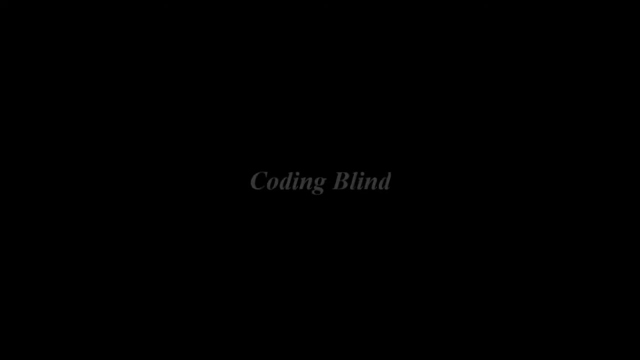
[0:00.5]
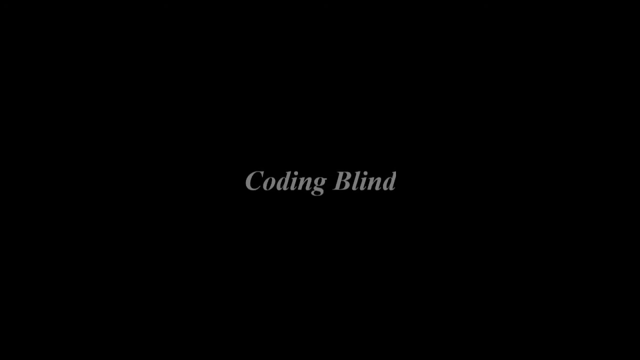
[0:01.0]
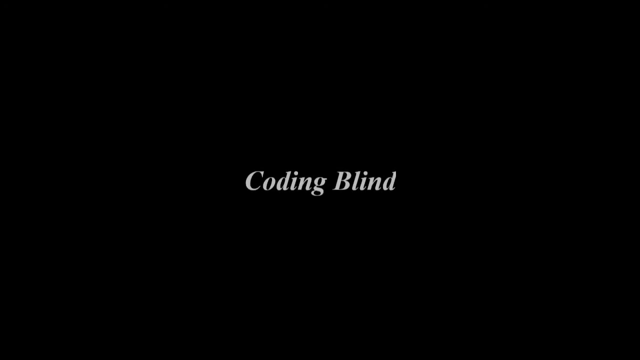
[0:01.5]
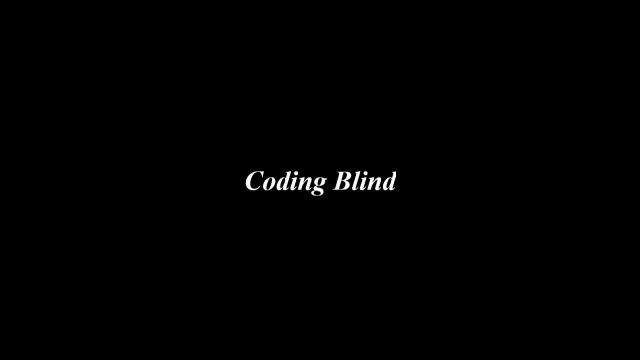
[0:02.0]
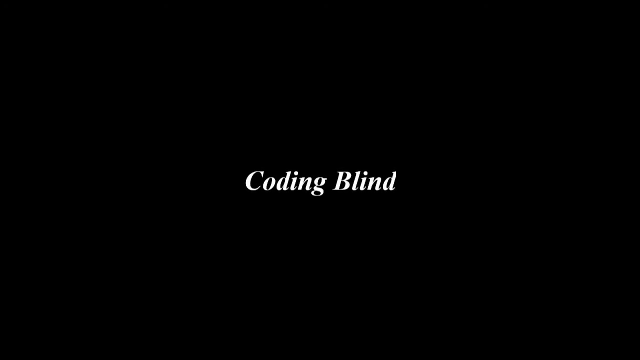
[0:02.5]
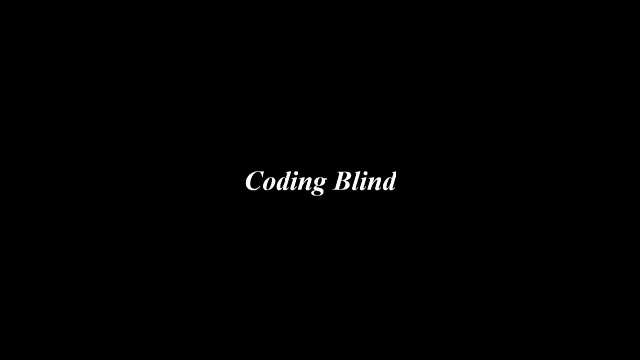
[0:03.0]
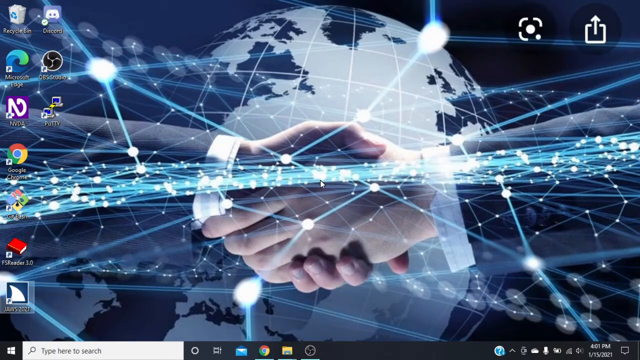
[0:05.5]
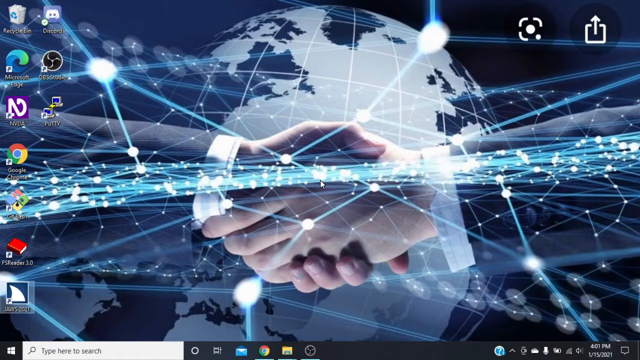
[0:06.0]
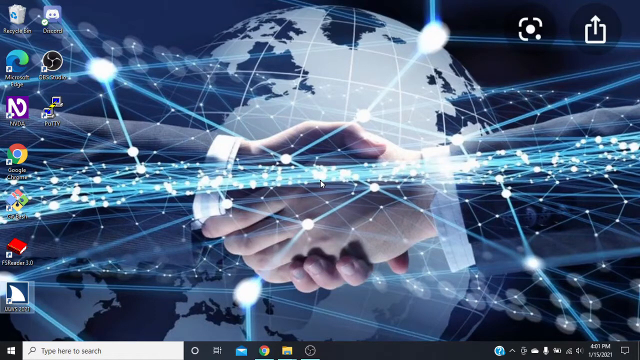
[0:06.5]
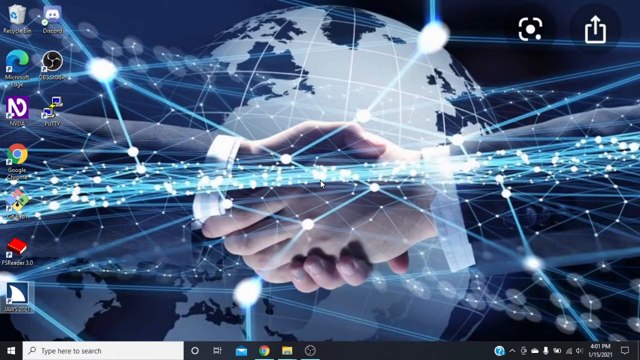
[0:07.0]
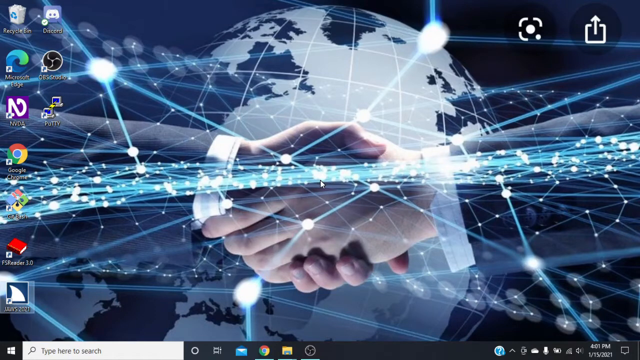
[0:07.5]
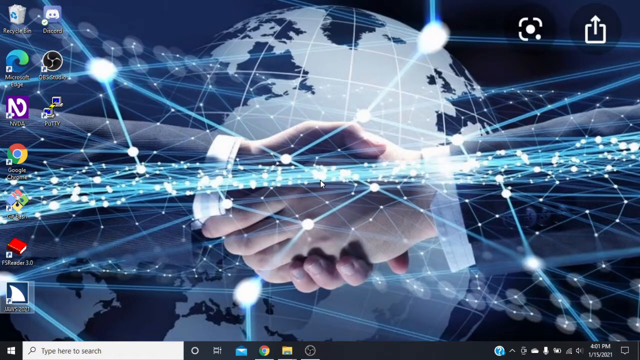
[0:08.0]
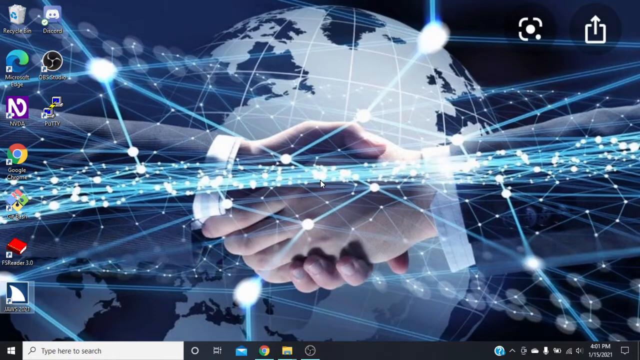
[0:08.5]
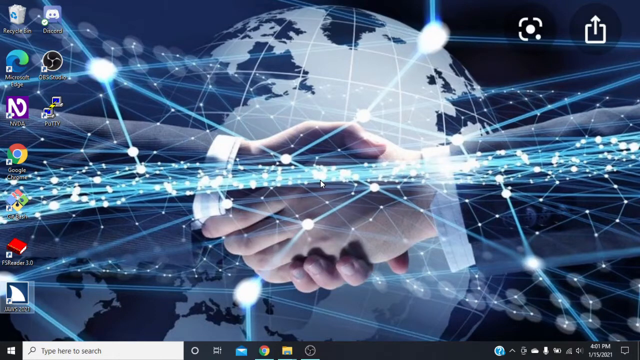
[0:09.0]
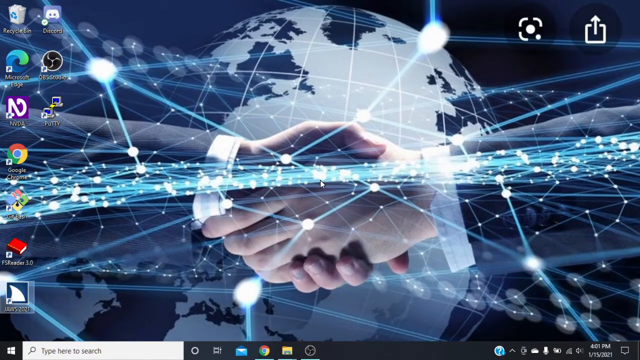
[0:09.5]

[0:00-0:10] The video opens on a black screen with white text in the middle that reads "Coding Blind." The text gets smaller and fades off the screen, and a screen recording of a computer or laptop appears. The computer's screen saver shows two hands shaking. Behind and in front of the hands are animations of lights connecting to different dots, and an animation or picture of the world is behind the shaking hands. There are icons on the left side of the screen and on the bottom menu, and the time and date are displayed at the bottom right.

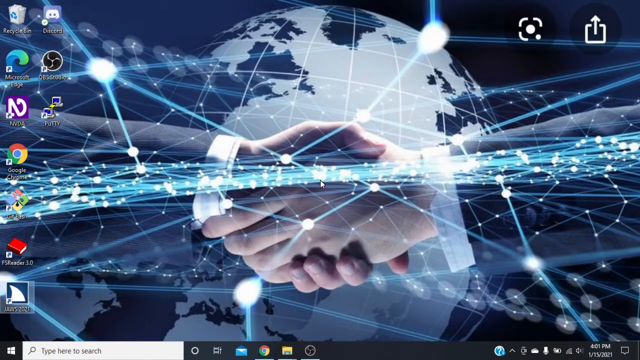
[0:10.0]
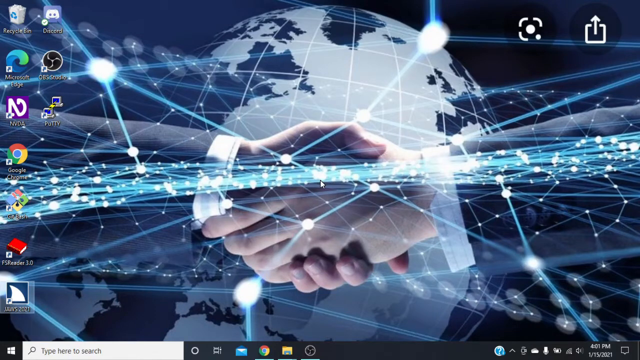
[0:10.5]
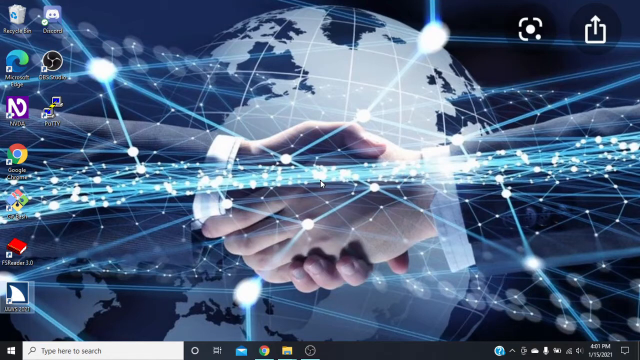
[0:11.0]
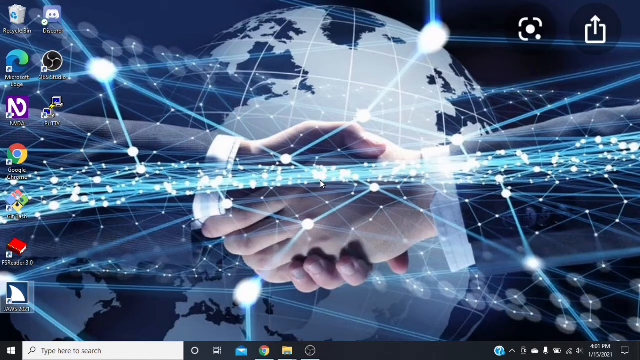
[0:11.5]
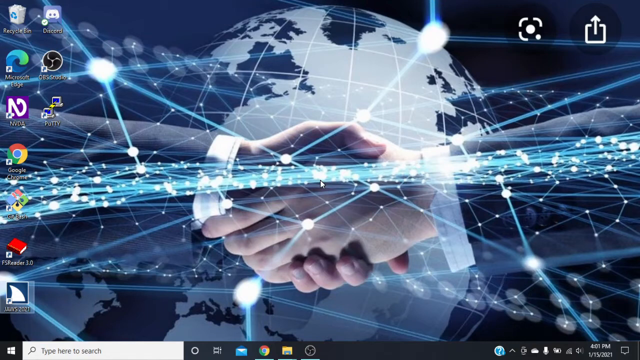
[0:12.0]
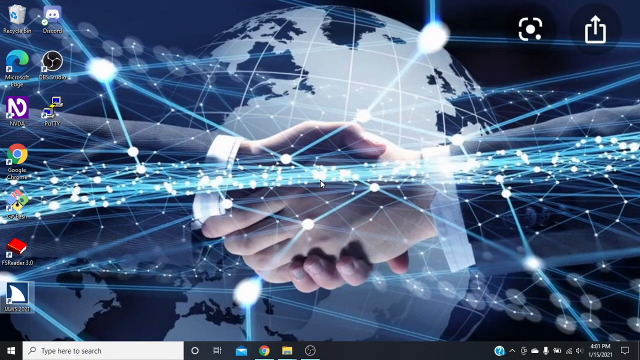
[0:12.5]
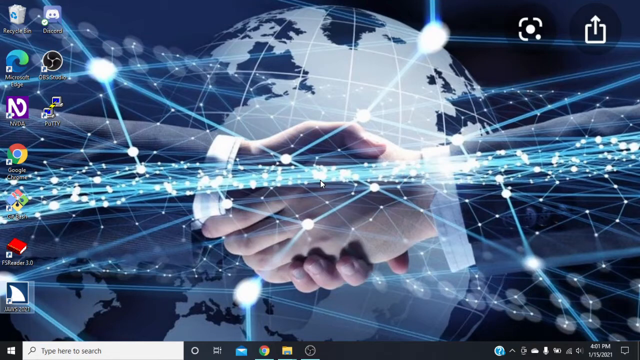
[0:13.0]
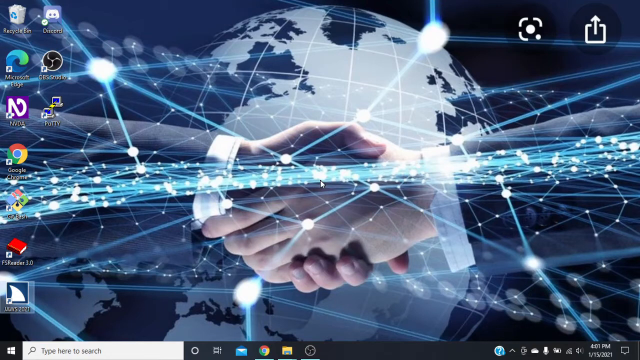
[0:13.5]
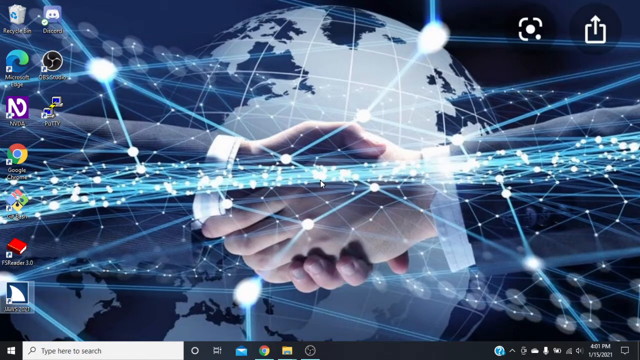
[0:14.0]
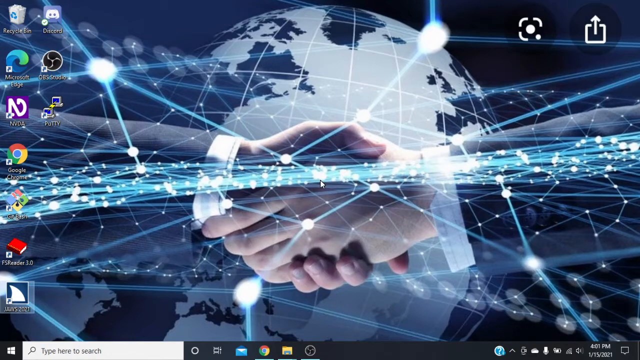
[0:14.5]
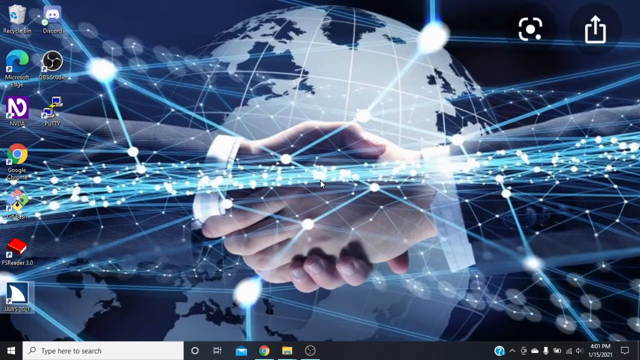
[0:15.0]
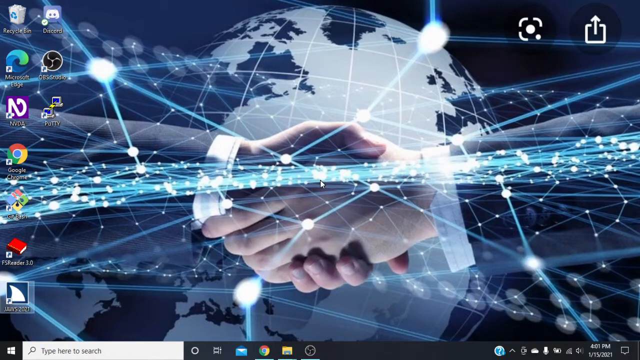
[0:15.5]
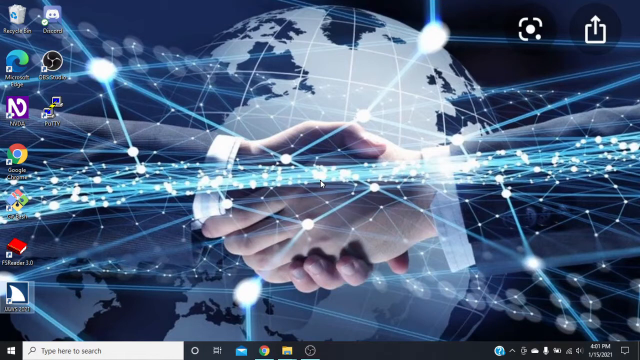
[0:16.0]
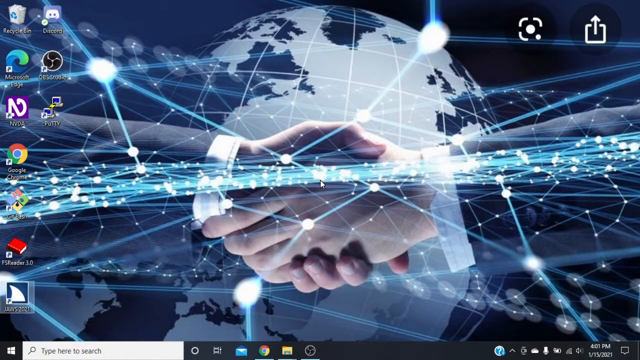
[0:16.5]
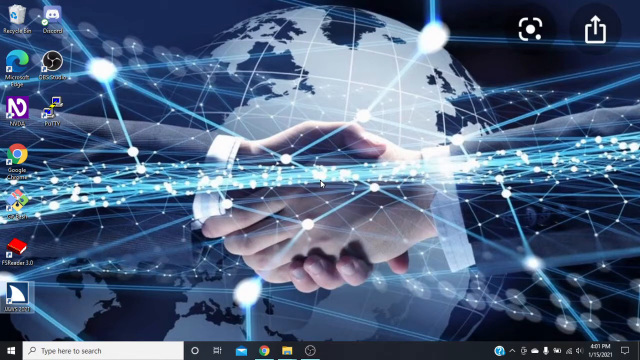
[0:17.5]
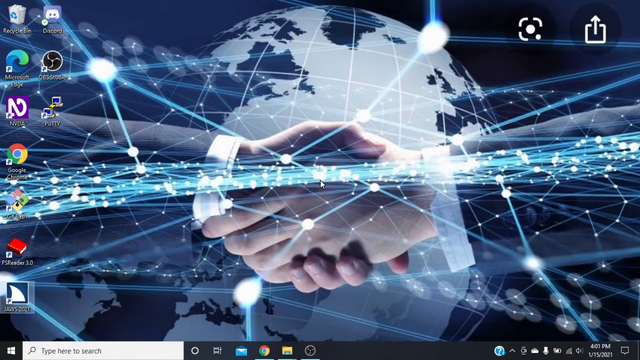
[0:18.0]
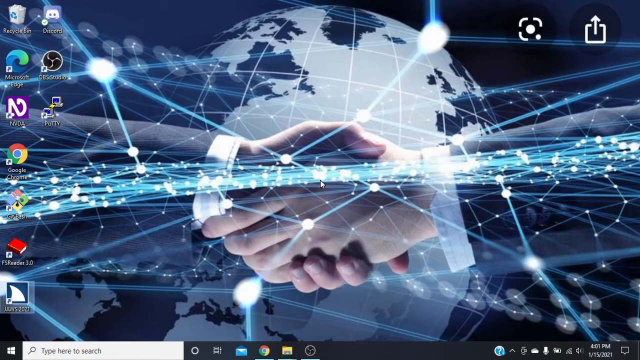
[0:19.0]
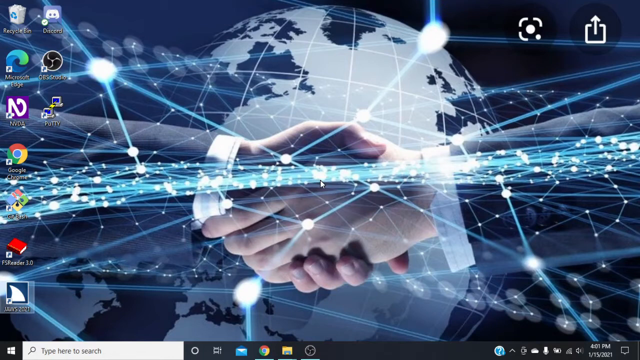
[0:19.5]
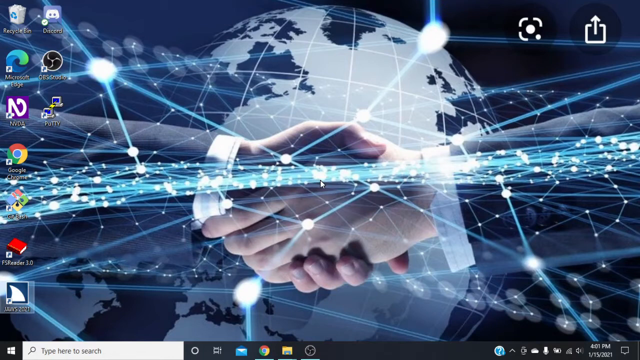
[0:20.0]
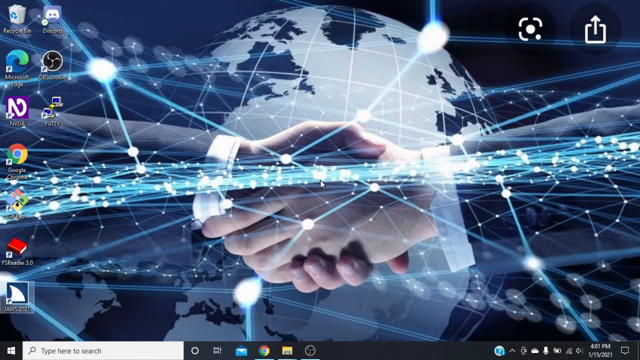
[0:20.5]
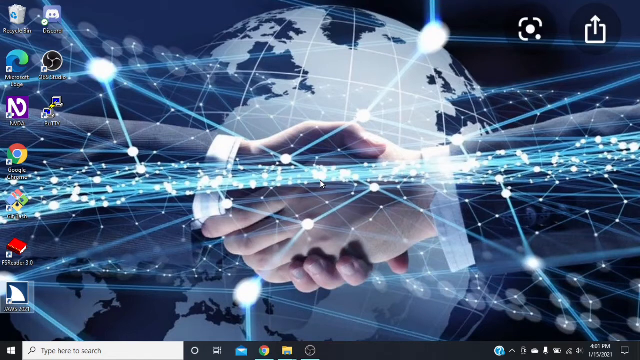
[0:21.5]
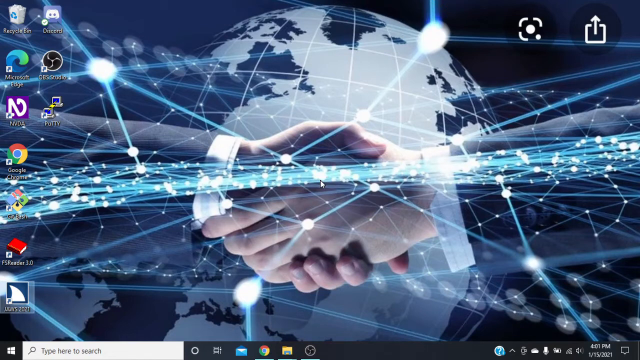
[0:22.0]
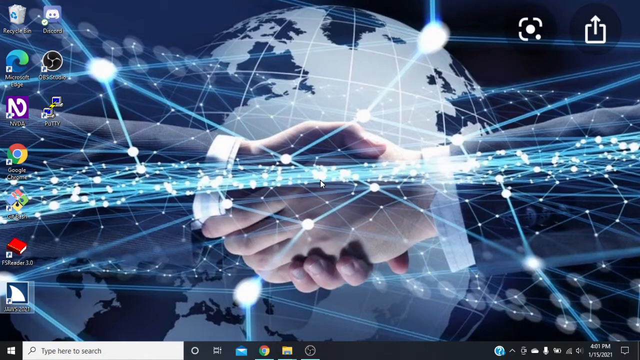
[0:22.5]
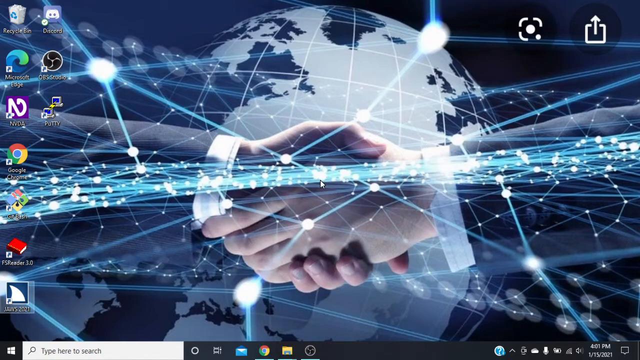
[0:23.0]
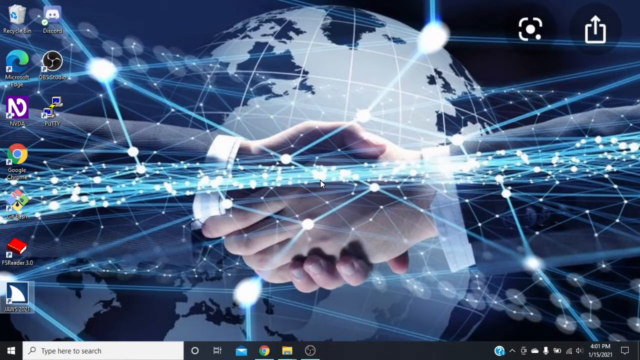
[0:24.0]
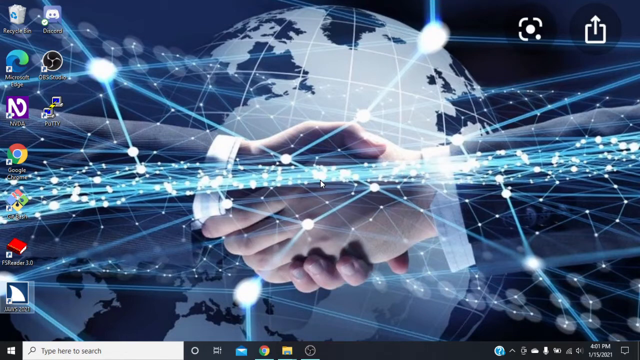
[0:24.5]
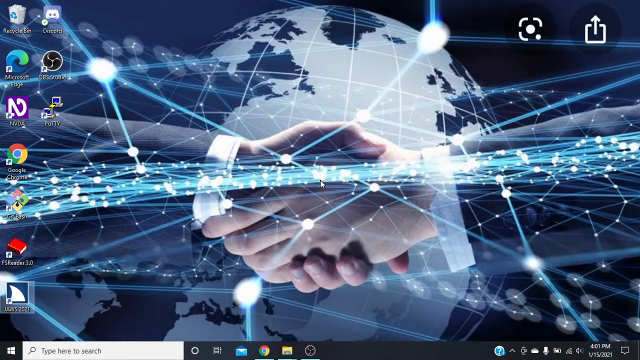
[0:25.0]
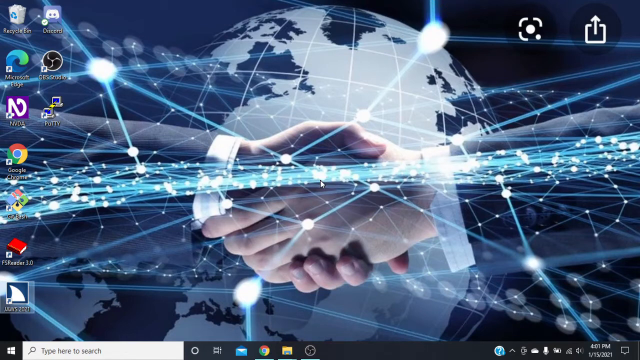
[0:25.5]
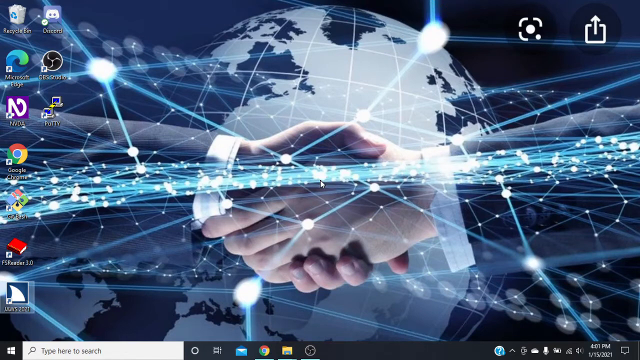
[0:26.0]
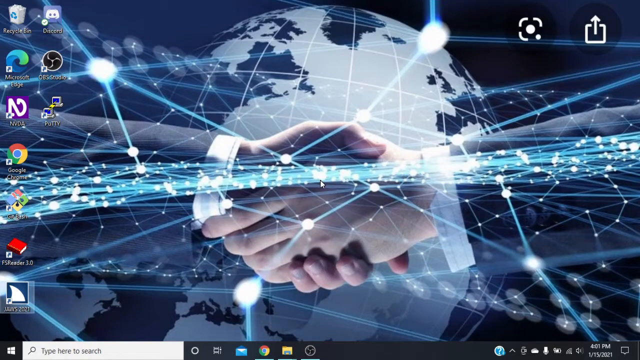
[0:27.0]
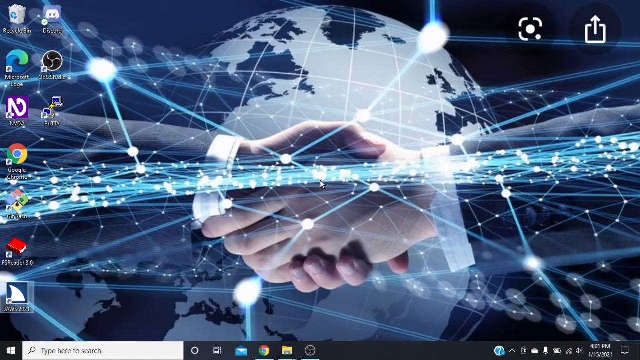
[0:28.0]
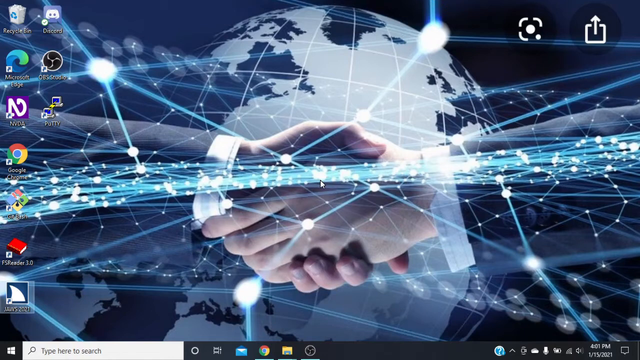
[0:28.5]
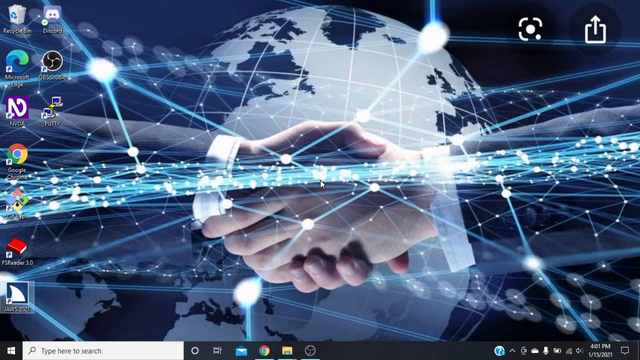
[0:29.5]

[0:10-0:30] The computer is a Windows computer, as shown by the Windows icon at the bottom left and the icons on the interface. The time is displayed as 4:01 pm. The computer is connected to the charger and to Wi-Fi. The apps on the left side of the screen are arranged in two columns: the first column has seven application icons and the second has three. The top three icons of the first column are lined up next to those of the second column. The bottom three icons in the first column are not readable because the background obstructs them. The readable icons in the first column are a recycling bin, Microsoft Edge, Google Chrome and NVDA; the apps in the second column are Discord, PuTTY and DBS Studio. There is a photo icon and a send icon at the top left of the screen.